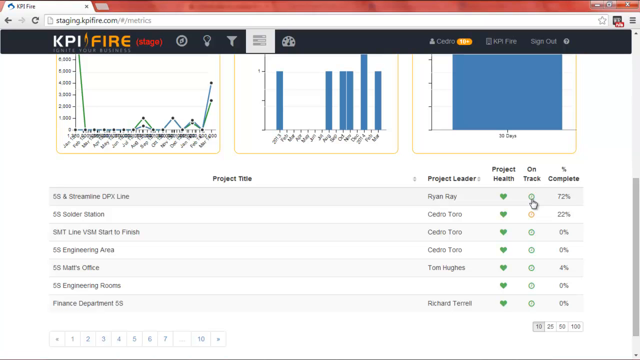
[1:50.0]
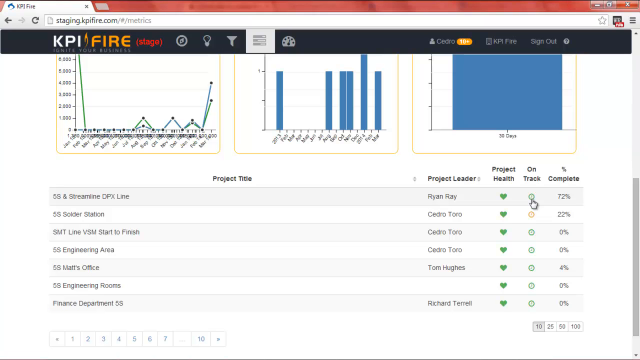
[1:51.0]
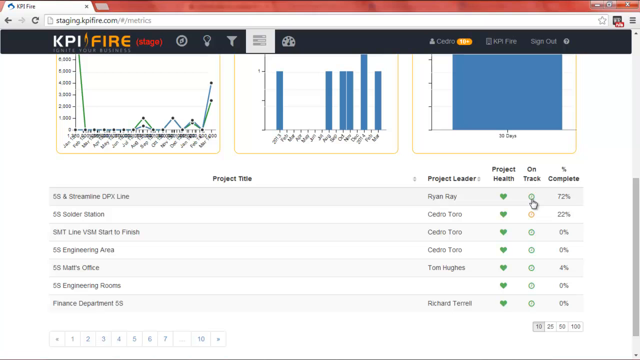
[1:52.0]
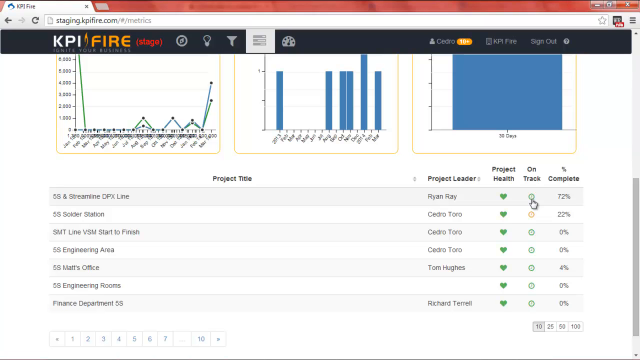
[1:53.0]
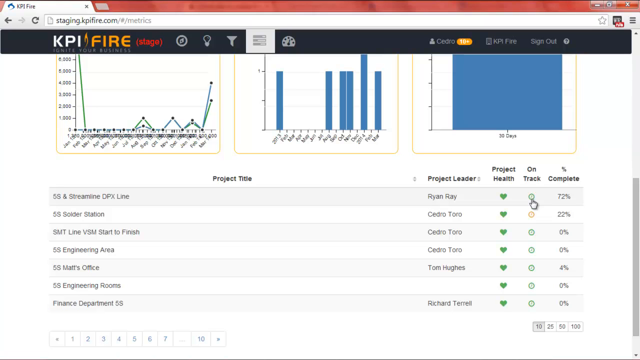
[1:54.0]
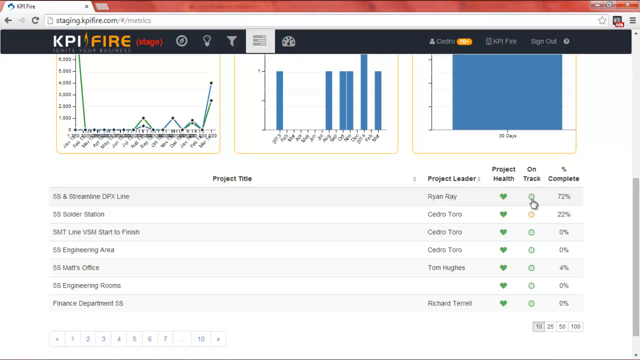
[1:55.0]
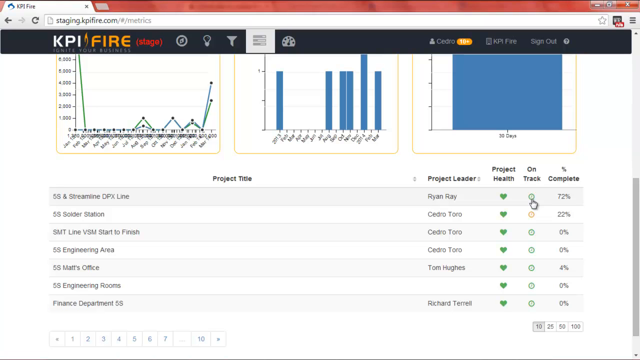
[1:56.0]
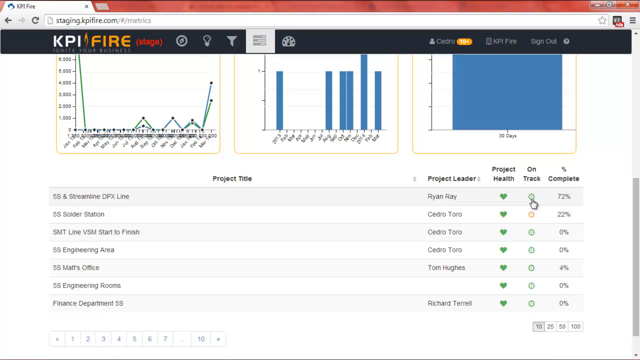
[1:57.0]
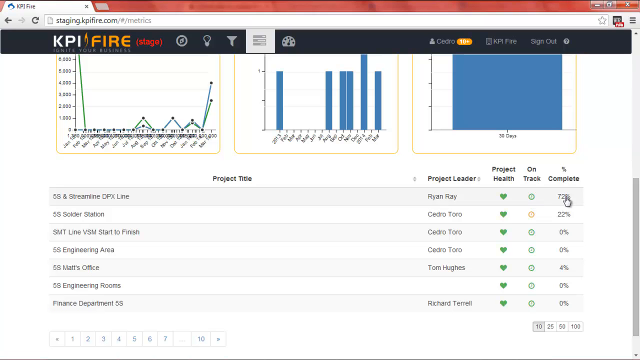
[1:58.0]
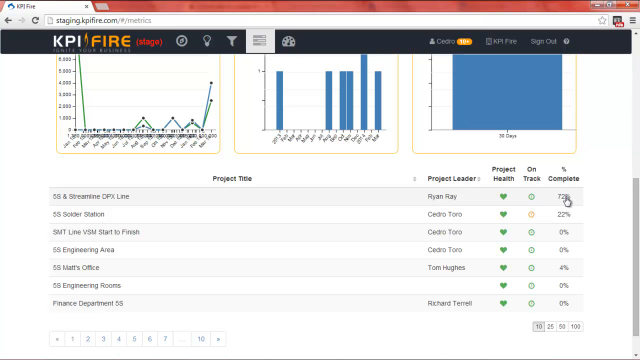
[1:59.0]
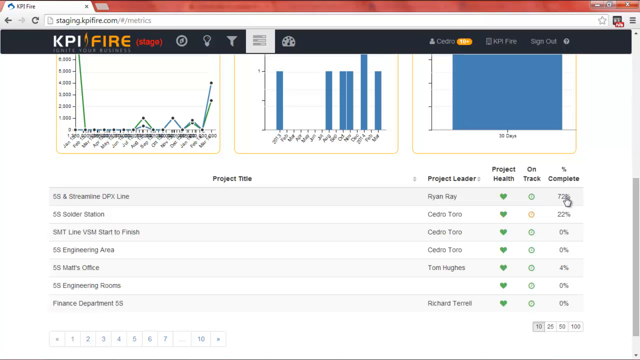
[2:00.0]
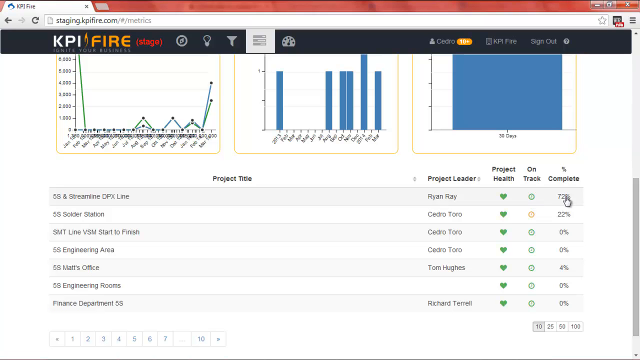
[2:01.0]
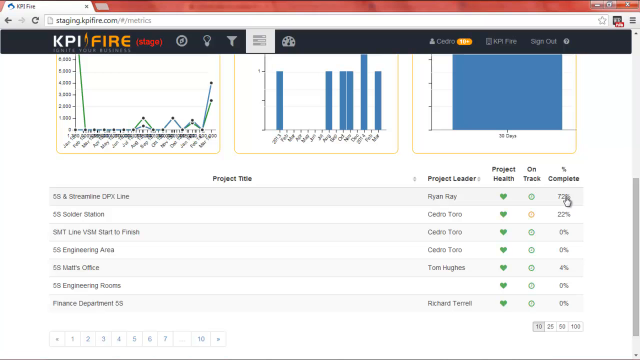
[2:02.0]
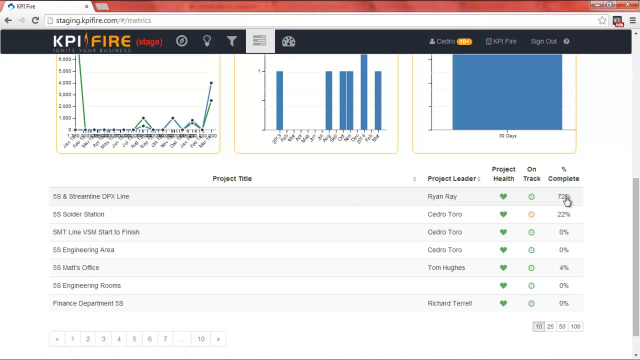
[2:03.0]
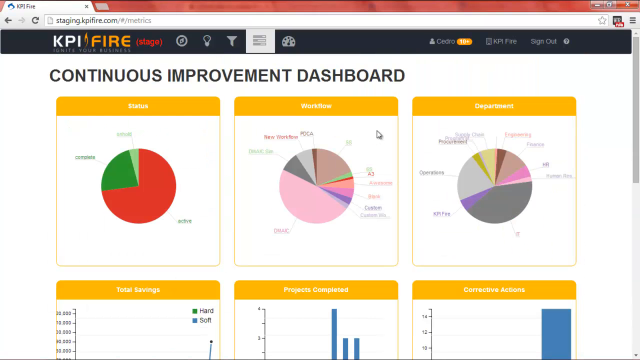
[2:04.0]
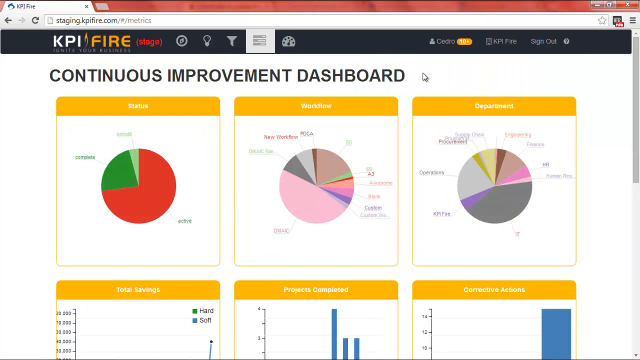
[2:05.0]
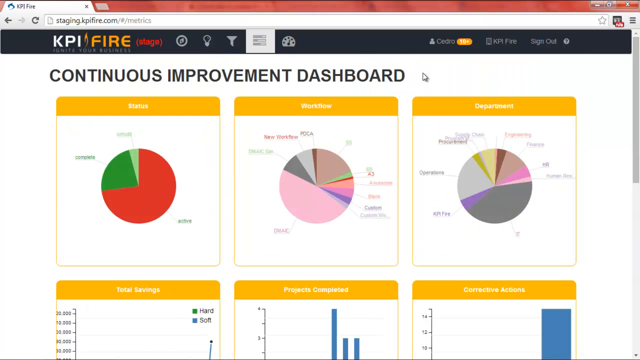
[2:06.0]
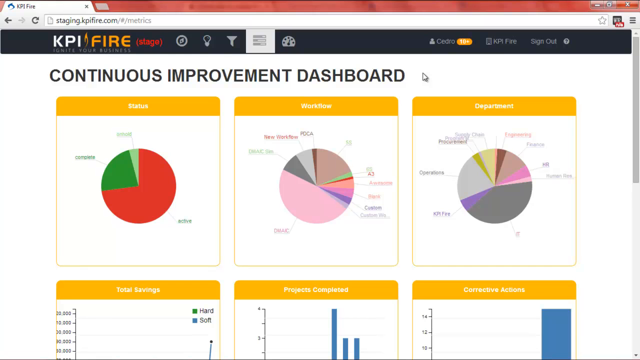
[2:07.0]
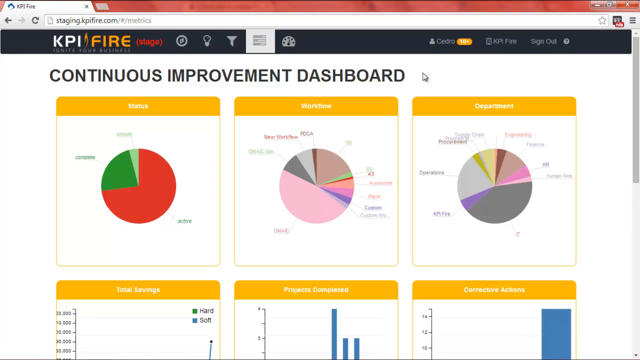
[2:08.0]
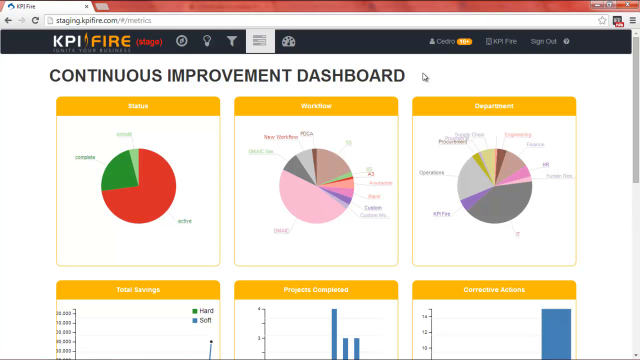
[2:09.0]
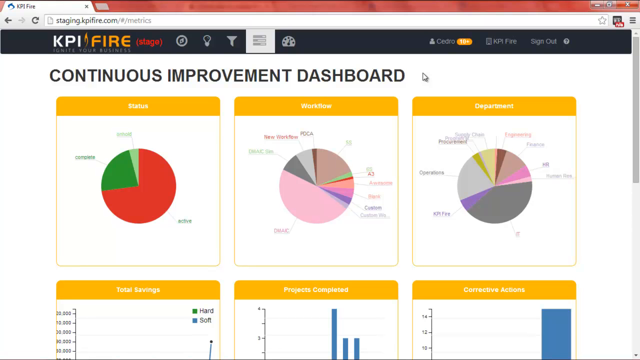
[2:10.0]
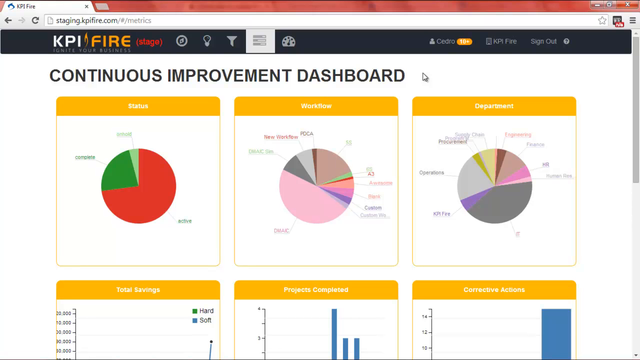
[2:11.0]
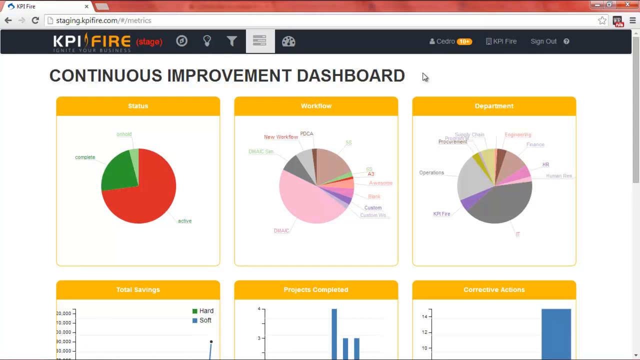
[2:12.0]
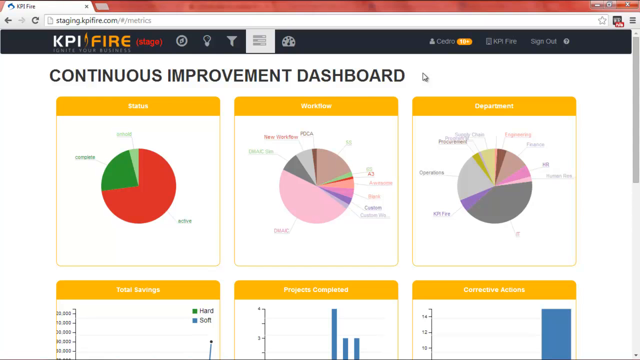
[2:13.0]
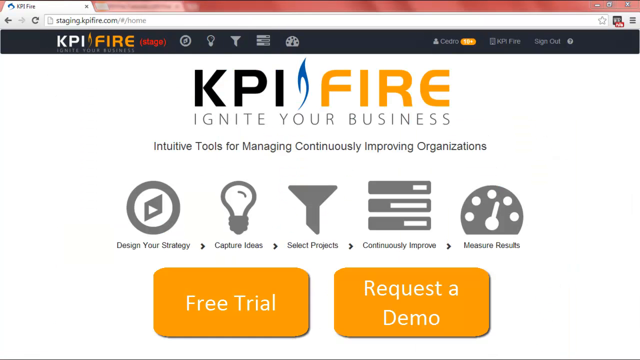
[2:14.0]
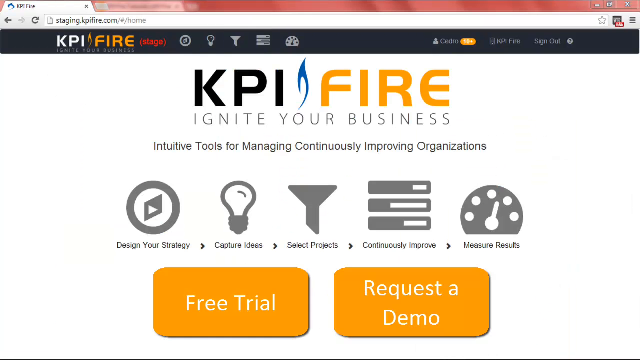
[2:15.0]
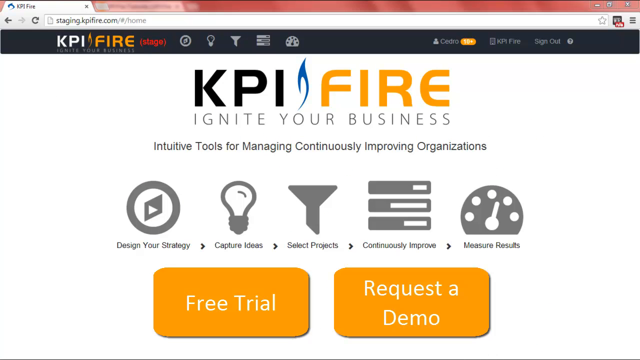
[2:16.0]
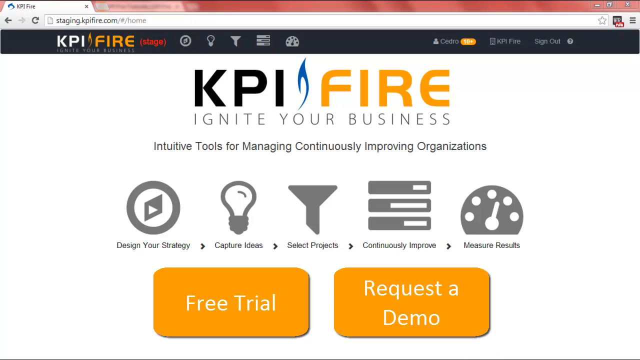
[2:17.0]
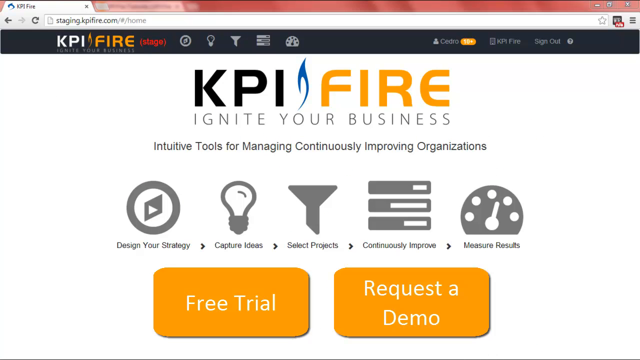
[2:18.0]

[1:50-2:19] The mouse remains hovered on the green clock symbol under on track for the first project, until the cursor moves to the percent complete section to the right, which shows 72% for this project. The view then returns to the top of the page with the three pie charts. The mouse moves slightly from the middle of the screen to the top right and stays there for a large portion of the remaining time. The screen then goes to the homepage, showing the KPI FHIR logo and the five steps in the strategy of Tools for Managing Continuously Improving Organizations: design your strategy, capture ideas, select projects, continuously improve, and measure results.